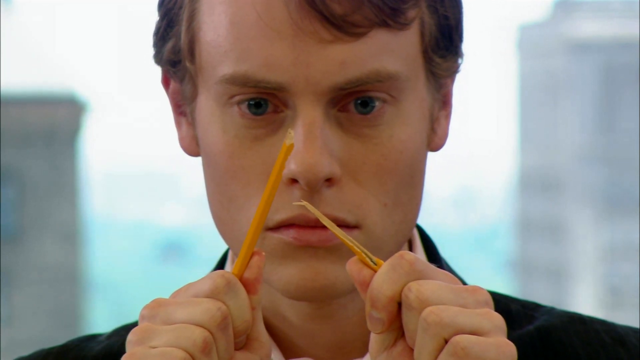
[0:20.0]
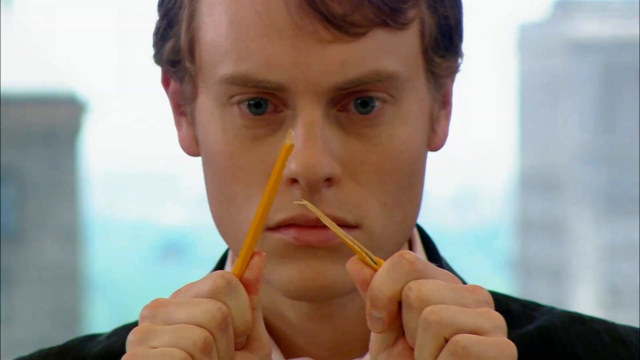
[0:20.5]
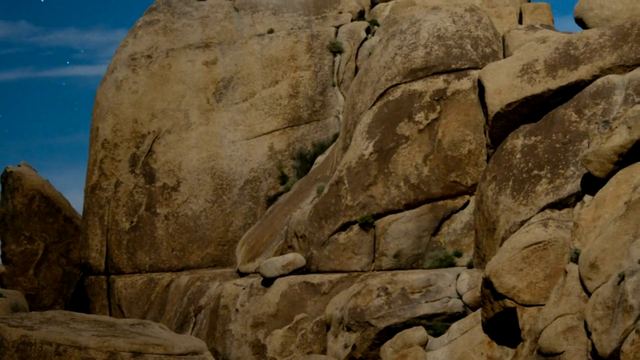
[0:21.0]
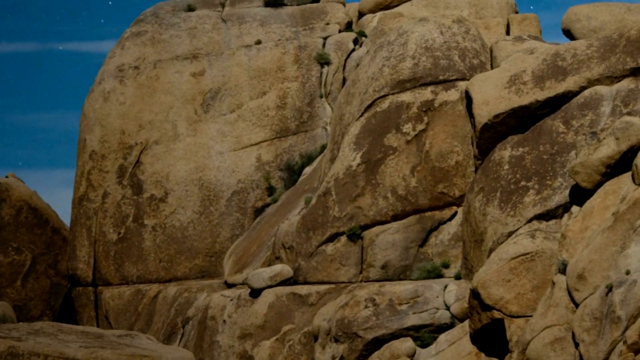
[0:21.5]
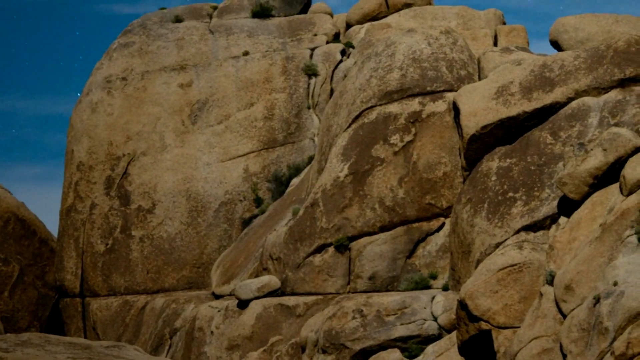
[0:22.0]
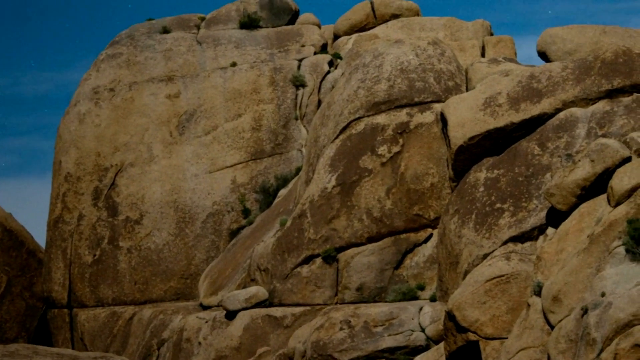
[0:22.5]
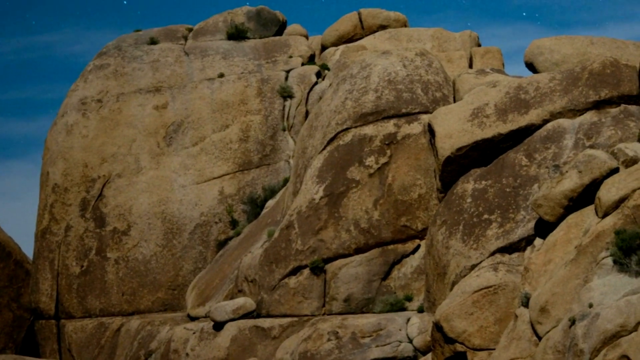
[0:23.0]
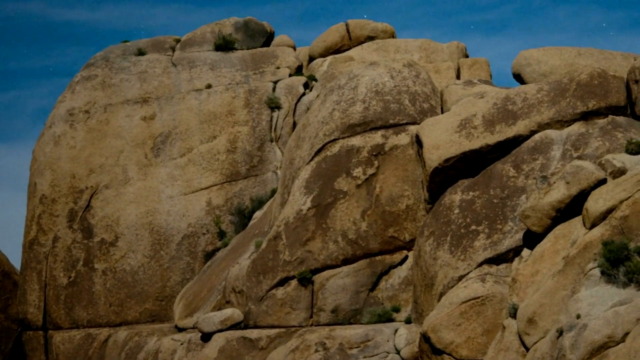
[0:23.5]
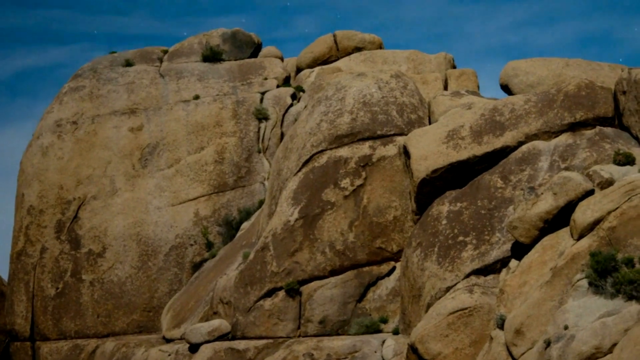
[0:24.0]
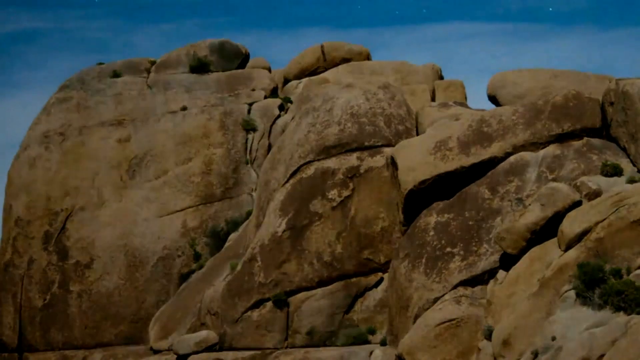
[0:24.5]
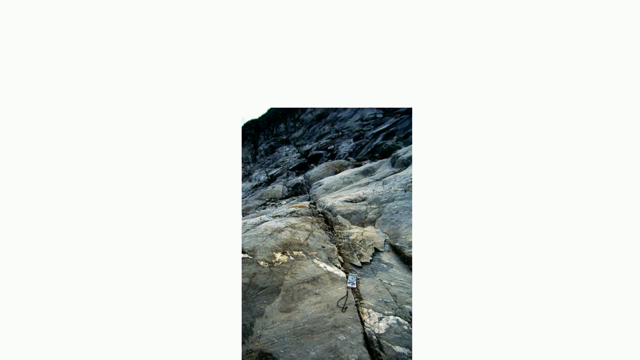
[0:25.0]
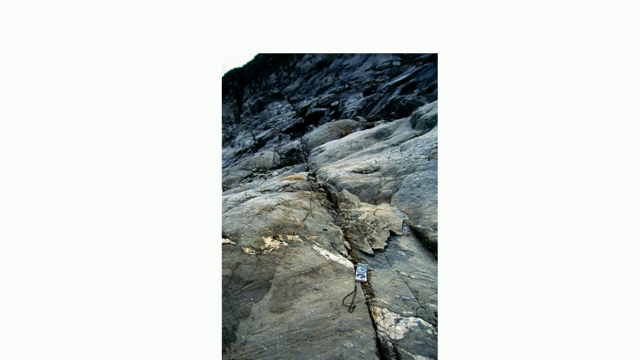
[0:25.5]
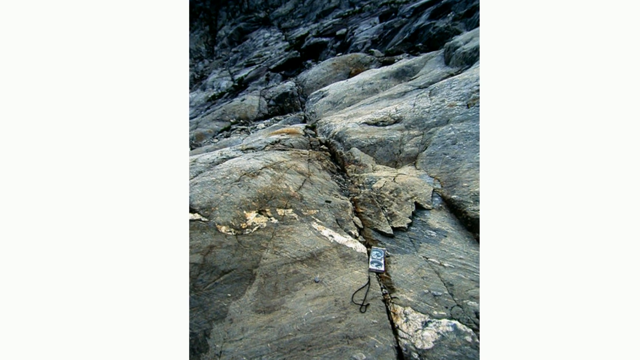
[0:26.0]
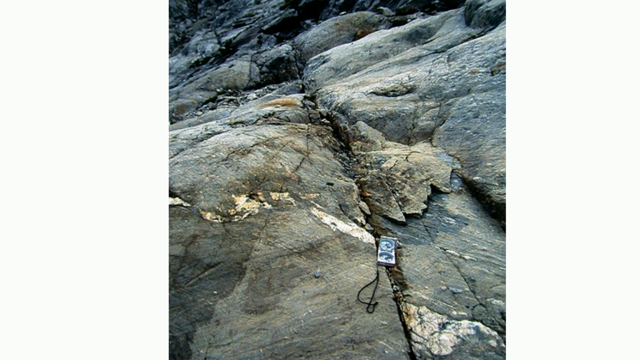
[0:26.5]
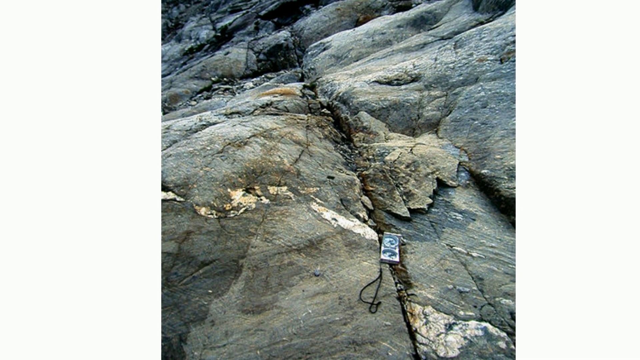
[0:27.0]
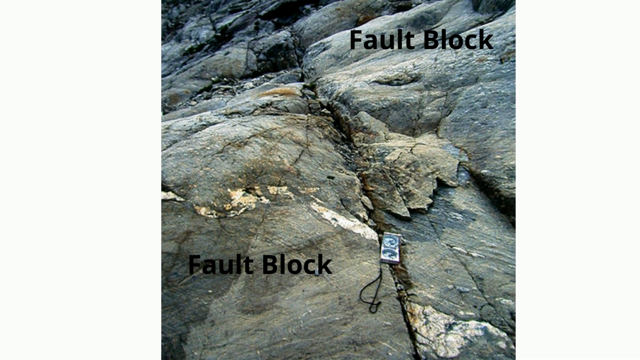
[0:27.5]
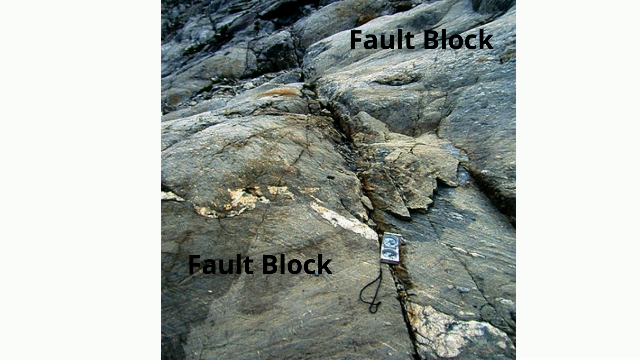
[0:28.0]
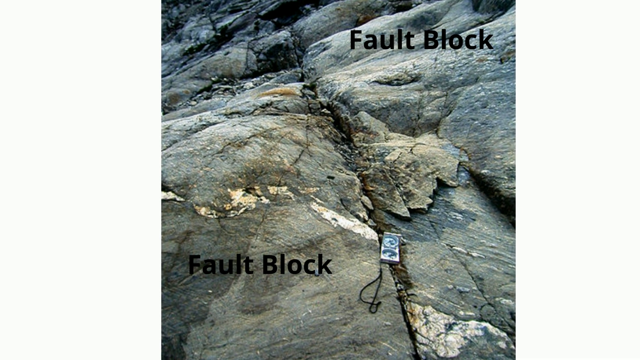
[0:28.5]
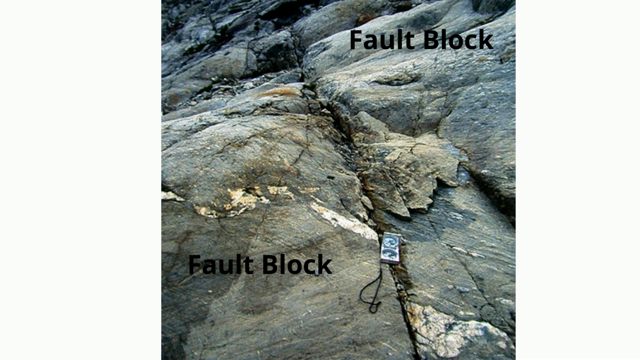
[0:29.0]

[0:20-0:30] A blue planet appears against a black background. It seems to develop yellowish-goldish lines that separate the continents, with the African continent standing out the most. A white man who appears to be in his 20s then breaks a pencil on screen, looking very distressed. After he breaks the pencil, the Earth is shown again, followed by a few rocks. The video then teaches about the different folds in rocks and mountains, such as normal folds and reverse folds, using pictures of mountains and graphs to demonstrate the different folds, for example from an earthquake. Finally, an illustration of a person says to please like, share, and subscribe.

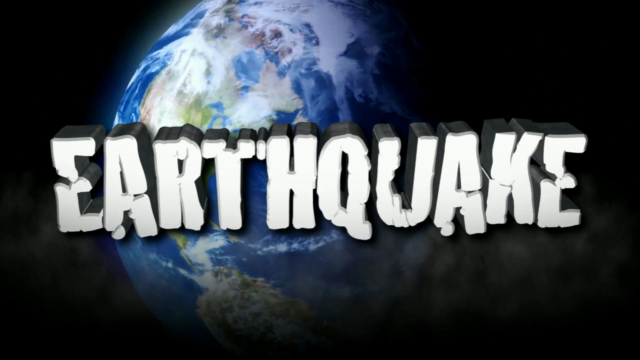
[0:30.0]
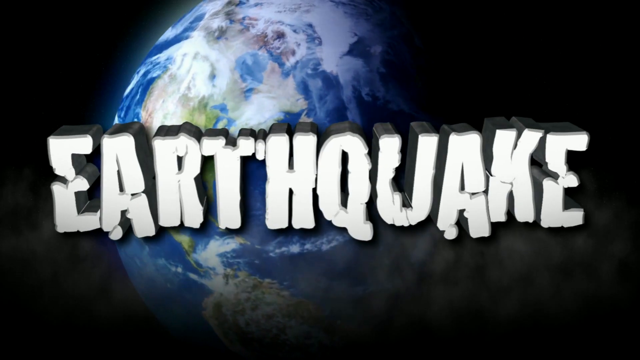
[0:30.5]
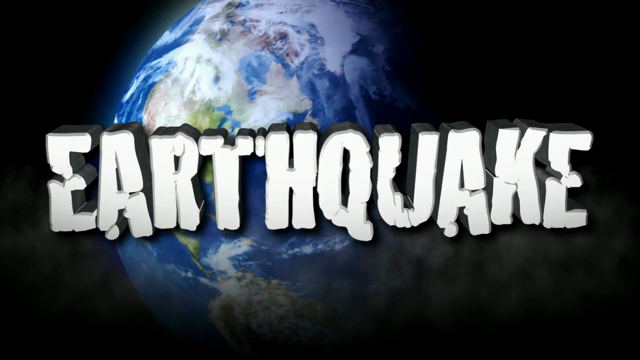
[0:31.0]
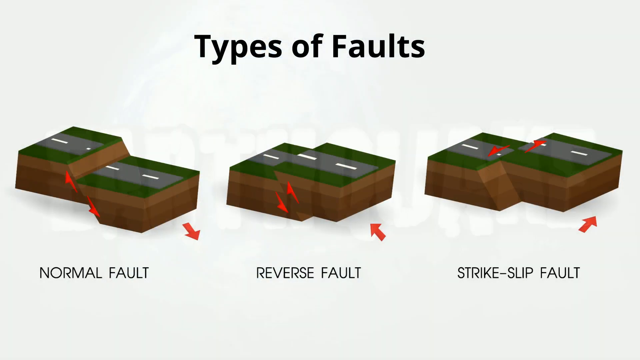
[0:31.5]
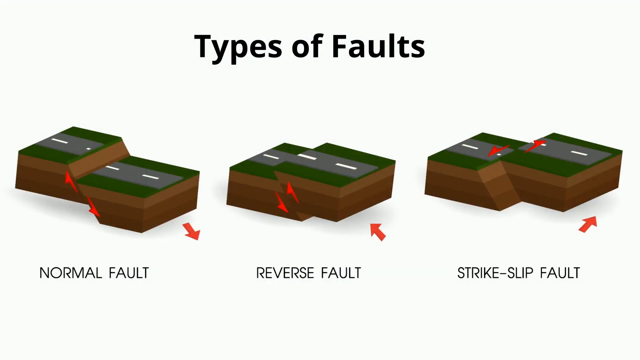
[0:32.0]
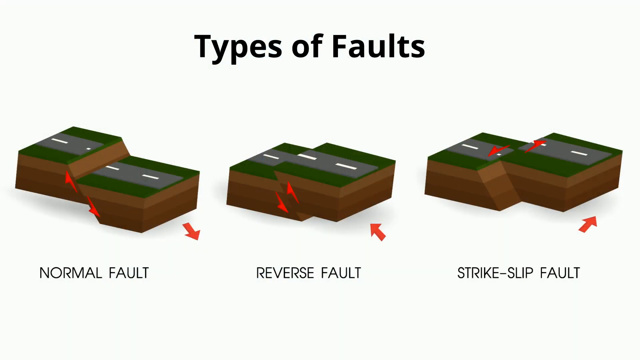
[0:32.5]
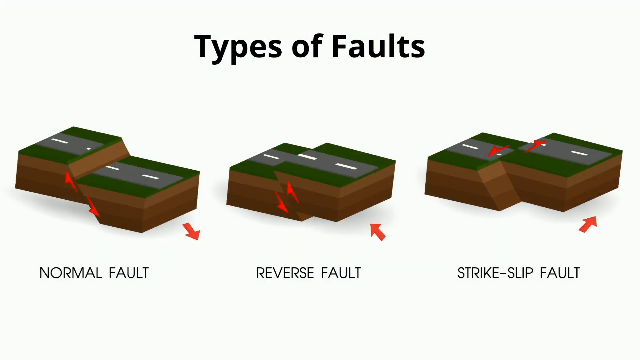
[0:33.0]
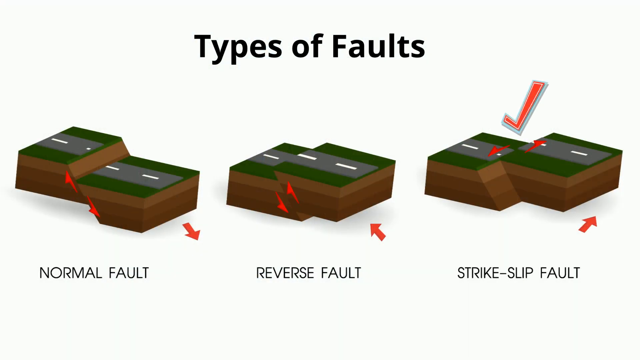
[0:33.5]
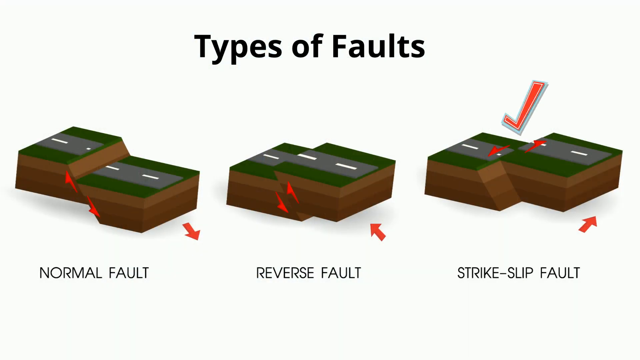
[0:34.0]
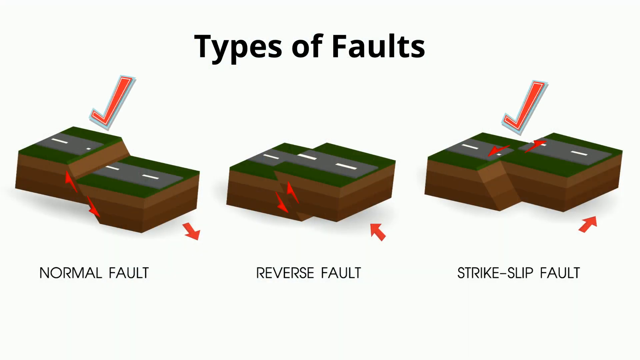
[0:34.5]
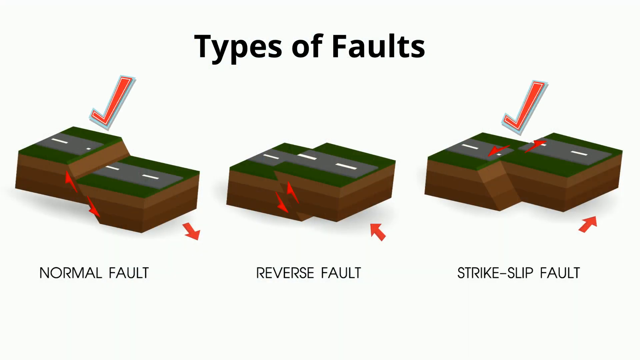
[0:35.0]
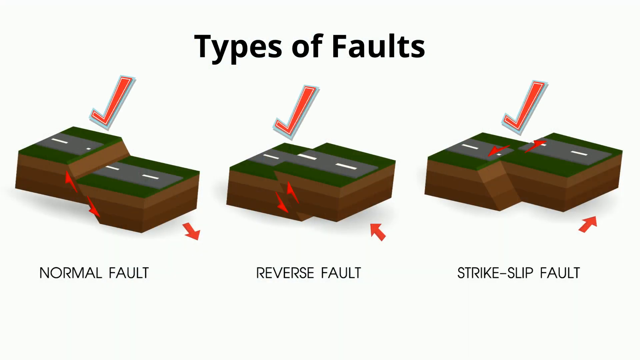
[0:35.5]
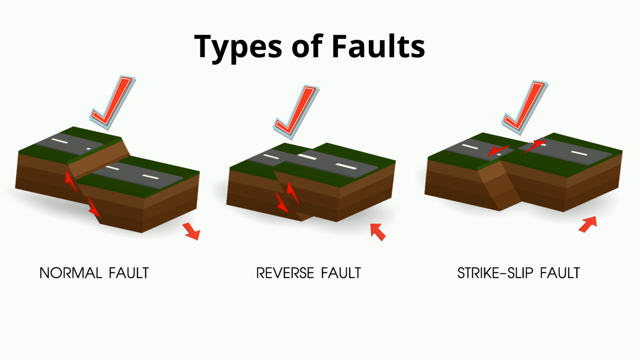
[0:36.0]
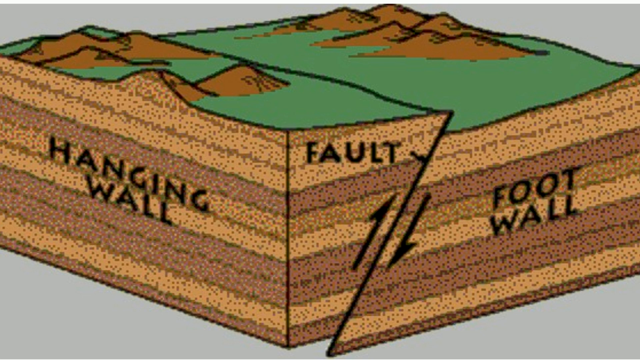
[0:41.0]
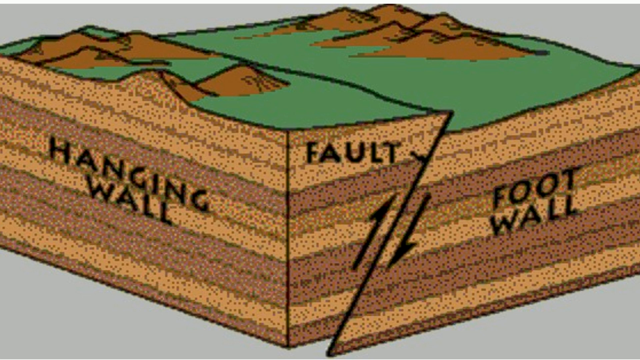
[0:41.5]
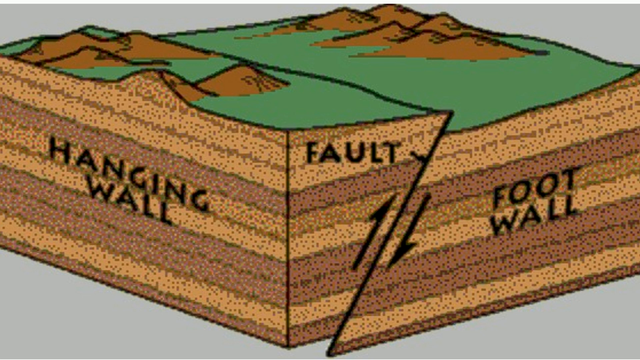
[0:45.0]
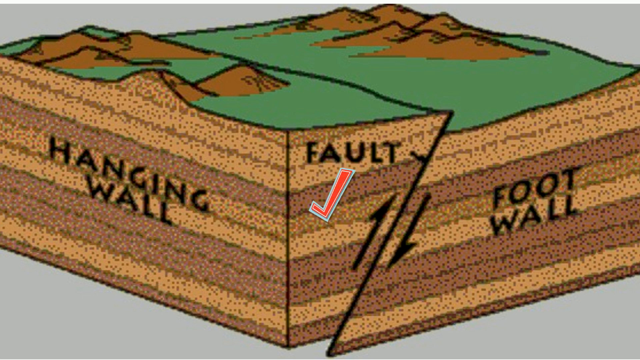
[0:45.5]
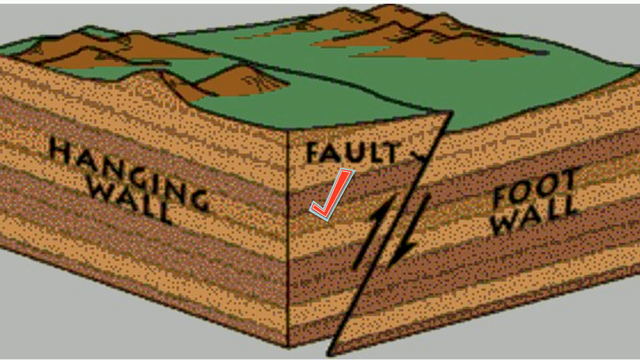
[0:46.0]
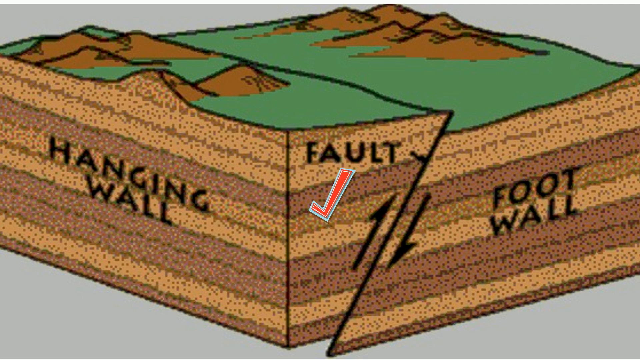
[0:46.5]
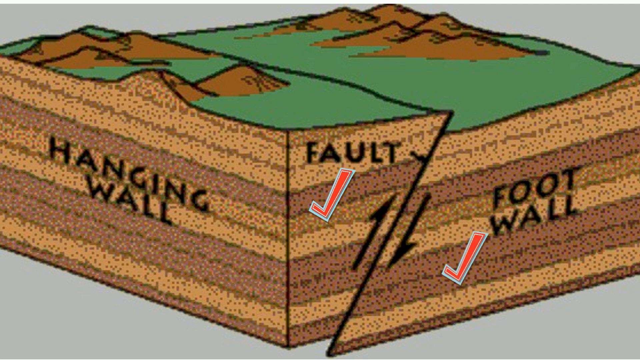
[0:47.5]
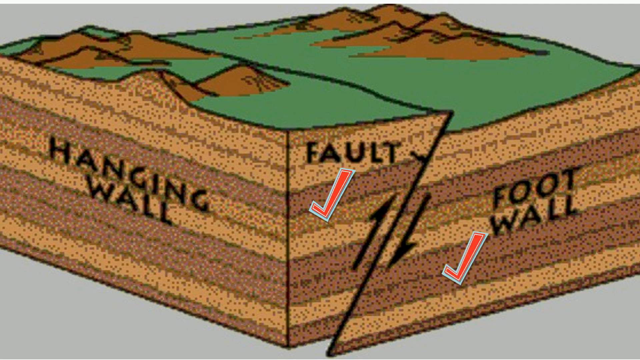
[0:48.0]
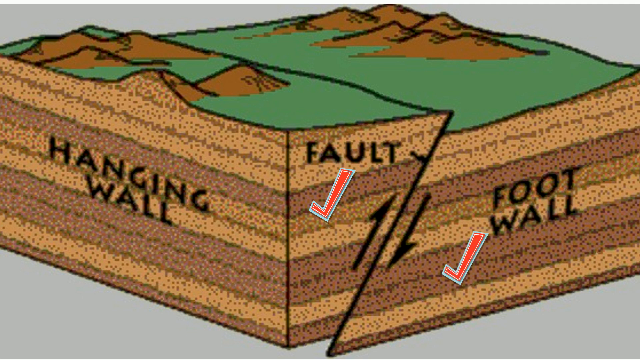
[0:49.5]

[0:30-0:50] A planet with a black background appears to have goldish lines, and then the continents separate from each other, with the African continent shown the most. A white man who appears to be in his 20s breaks a yellow pencil. Next comes a rock with faults, followed by a few diagrams teaching about faults: the normal fault, the reverse fault, and the slip fault. For the reverse fault, different mountains show the fault, and for the slip fault, the San Andreas mountains are shown. The illustrations are yellow to orangish. At the end, a cartoon illustration says please like, share, and subscribe to the YouTube channel and thanks the viewer for watching.